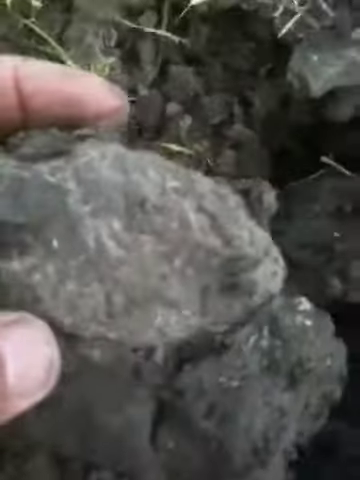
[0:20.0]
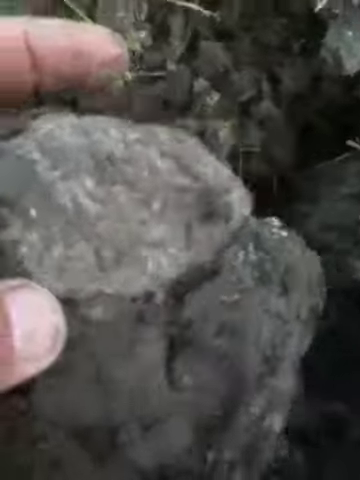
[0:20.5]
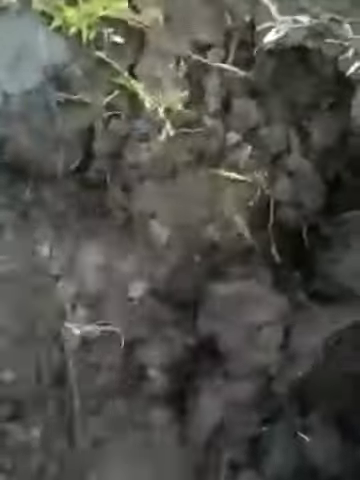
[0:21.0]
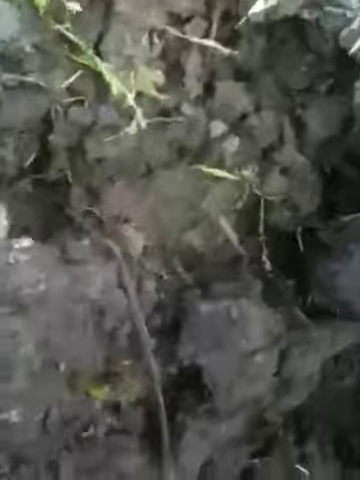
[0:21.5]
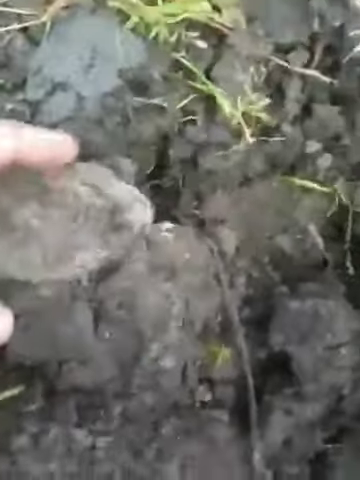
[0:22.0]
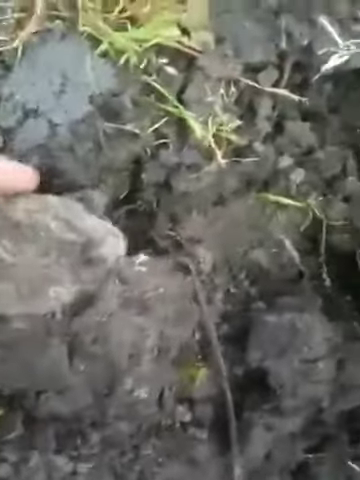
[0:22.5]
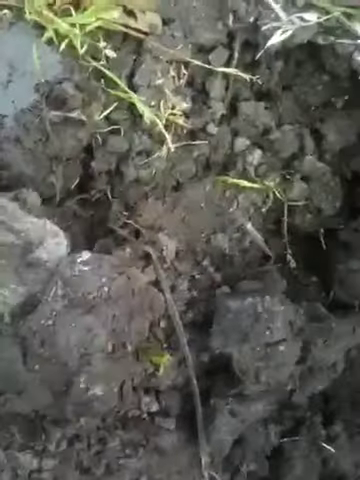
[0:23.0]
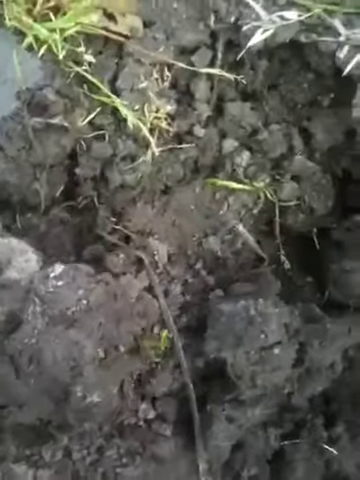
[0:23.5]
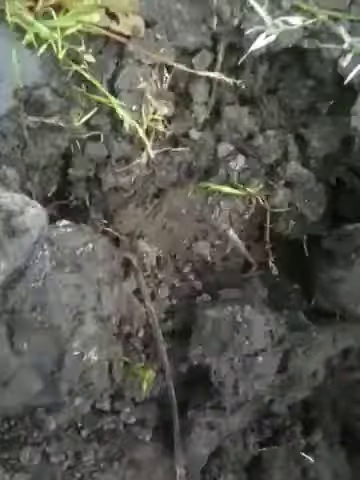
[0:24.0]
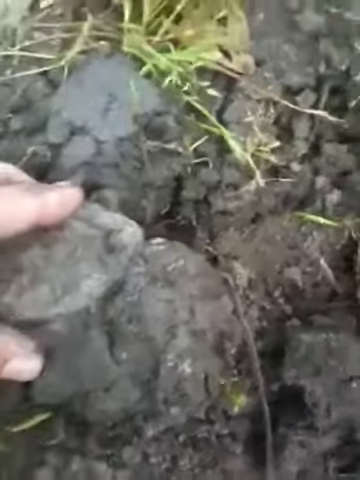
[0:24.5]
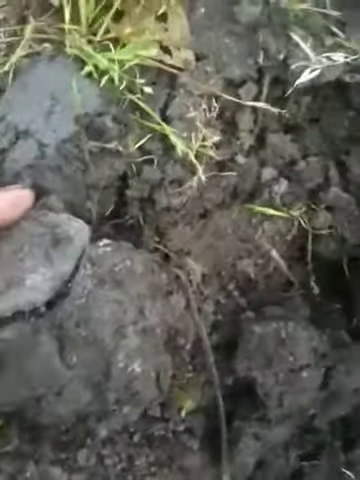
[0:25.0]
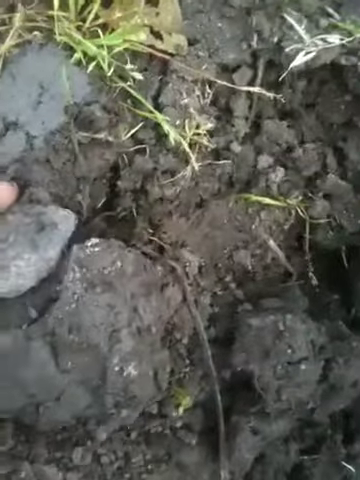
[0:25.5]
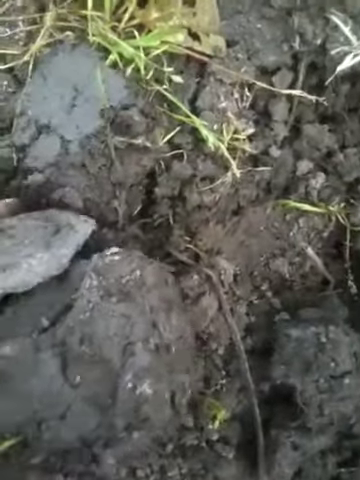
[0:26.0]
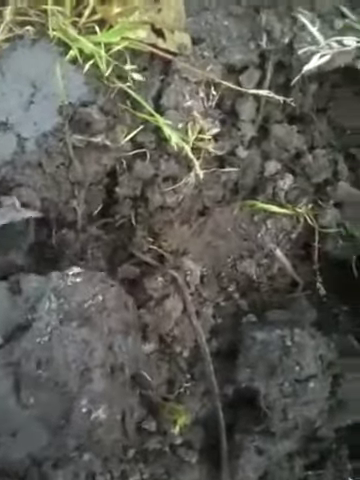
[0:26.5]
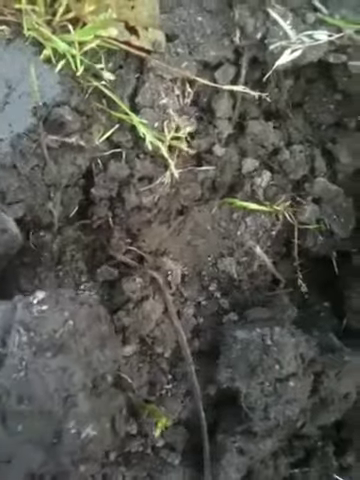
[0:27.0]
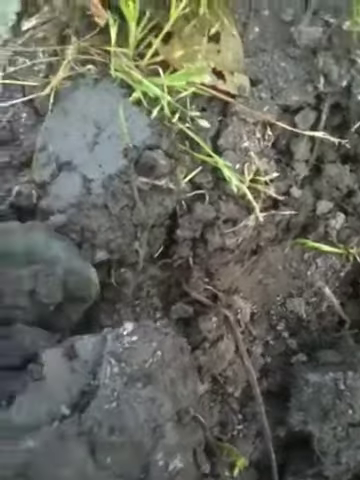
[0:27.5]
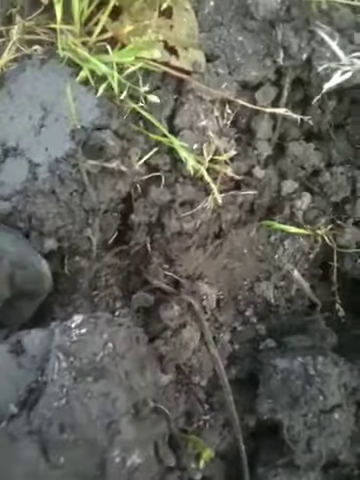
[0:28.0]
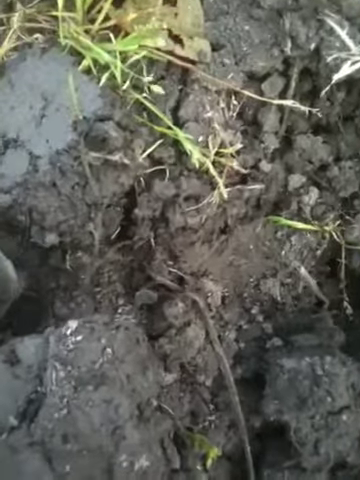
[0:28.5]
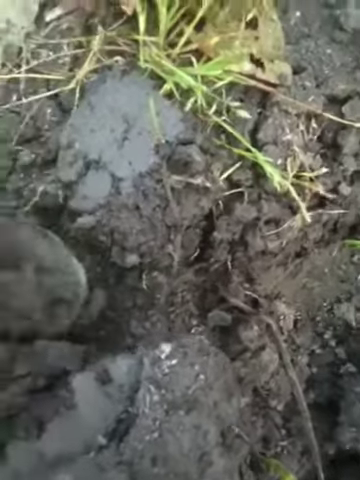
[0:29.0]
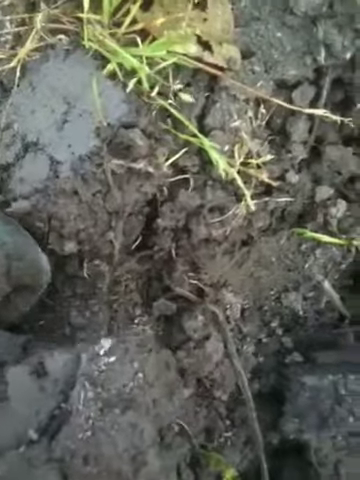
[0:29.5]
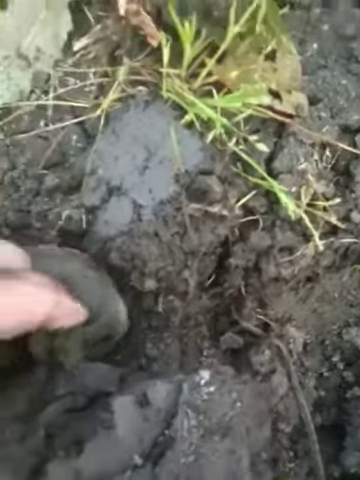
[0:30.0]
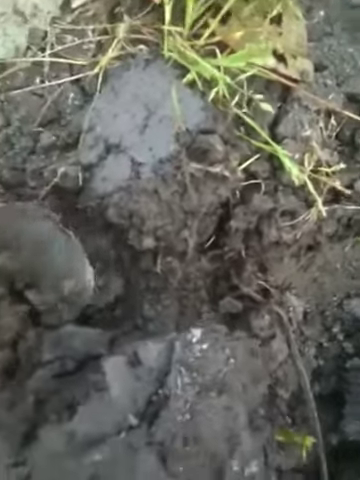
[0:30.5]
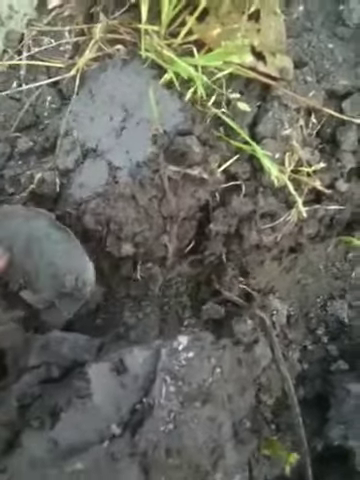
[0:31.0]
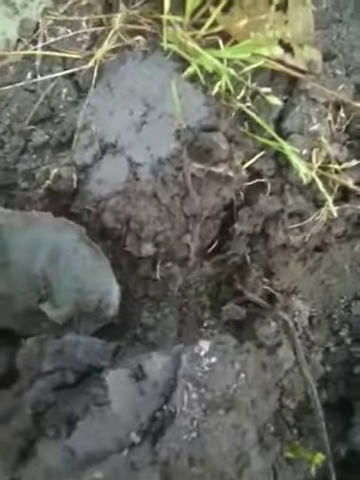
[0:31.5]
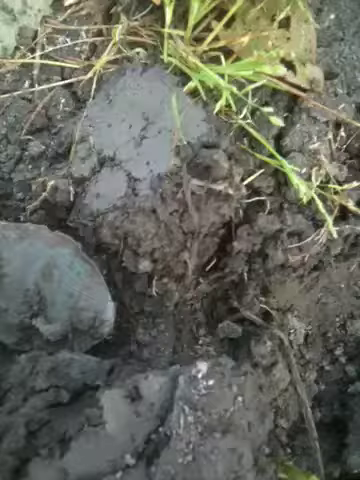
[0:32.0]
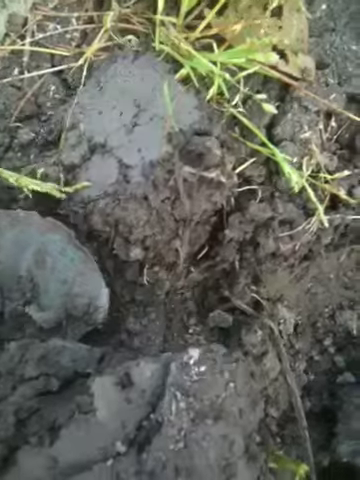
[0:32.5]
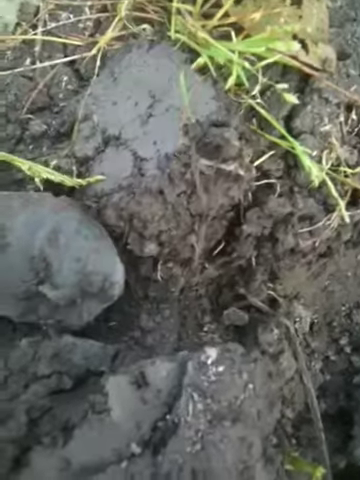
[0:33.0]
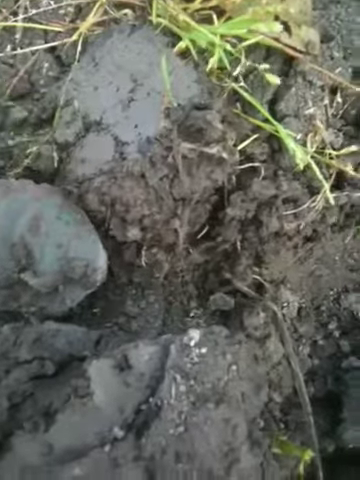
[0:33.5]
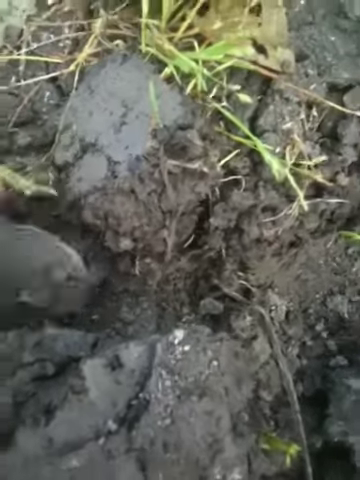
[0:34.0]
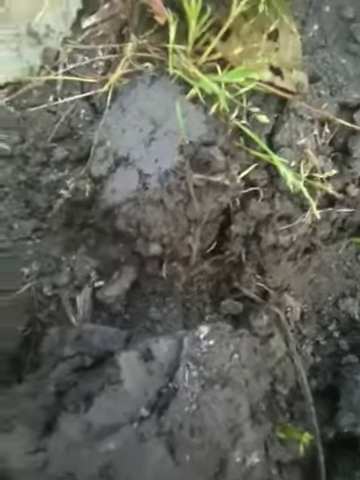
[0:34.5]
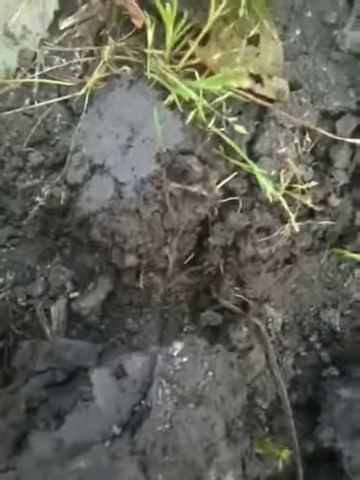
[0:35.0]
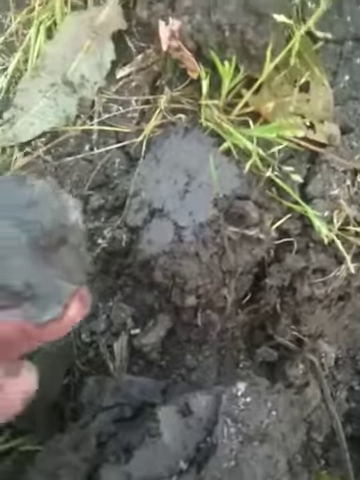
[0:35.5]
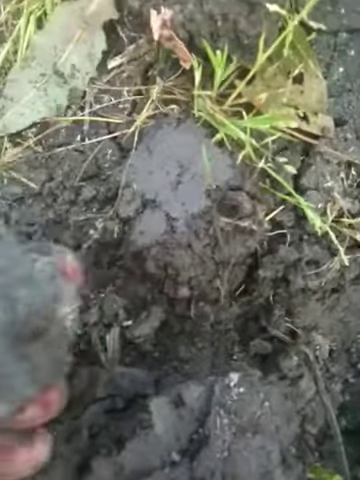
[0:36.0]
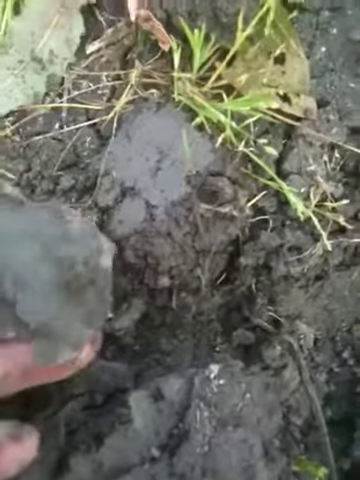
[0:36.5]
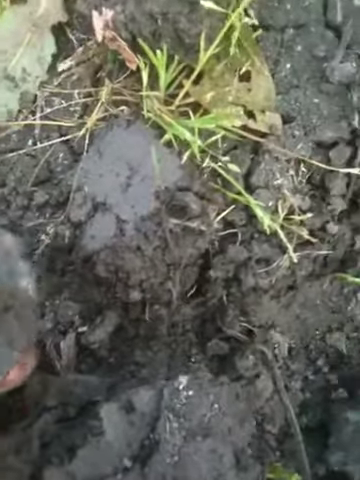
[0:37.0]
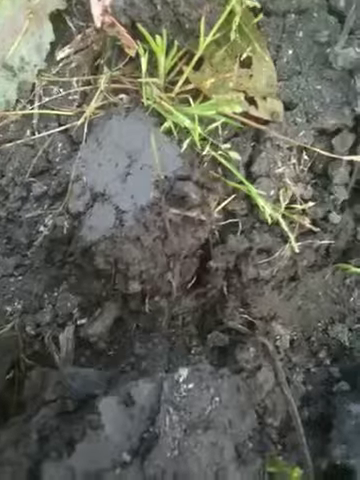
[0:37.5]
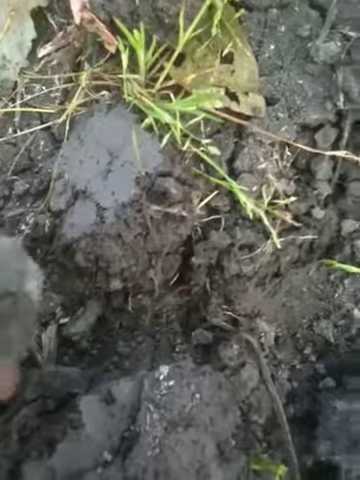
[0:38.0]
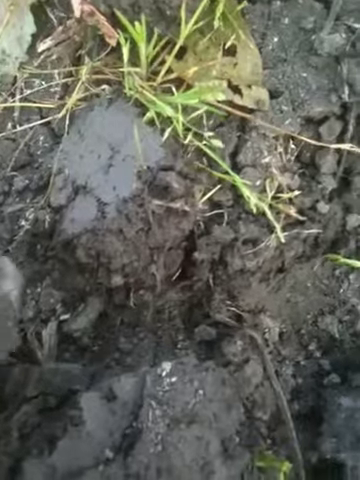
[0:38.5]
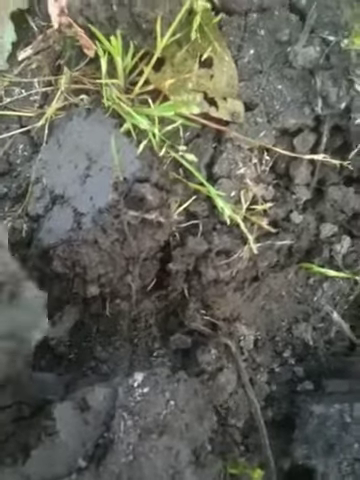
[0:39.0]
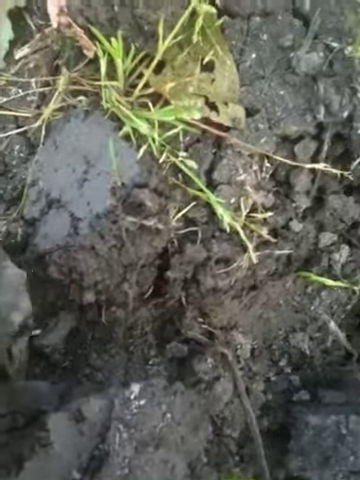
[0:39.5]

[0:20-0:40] A close-up vertical phone video in an outdoor setting shows a white male's hand on the left side of the camera holding a rock. Underneath the rock is a dug-out, busted-up hole about a foot deep, with a series of clumps of dirt and slight grass and vegetation around it. The rock appears to be some sort of fossil or mineral: its top portion is semi-translucent and colorful, while its bottom portion is more muddy and a solid color. He places the rock down on the left side of the hole among various muddy textures, then breaks it apart and moves the multicolored piece of rock out of the other clump of dirt. It is very muddy, and the bottom portion of the rock, as well as the dirt and grass he puts it on, seems very wet. He slightly wipes some of the mud off the translucent rock and then picks it up.